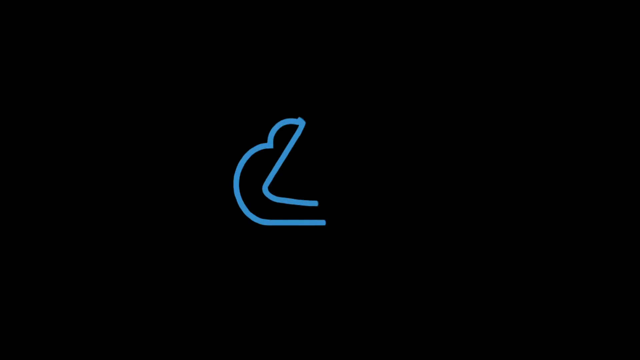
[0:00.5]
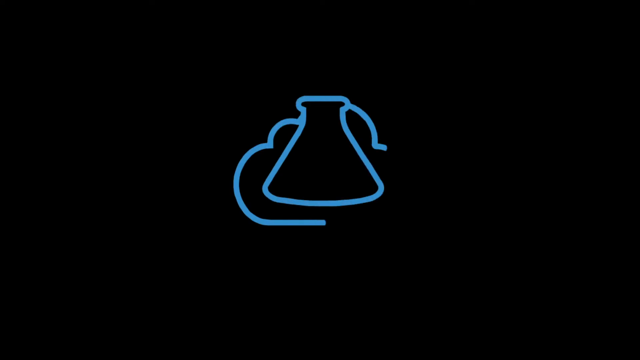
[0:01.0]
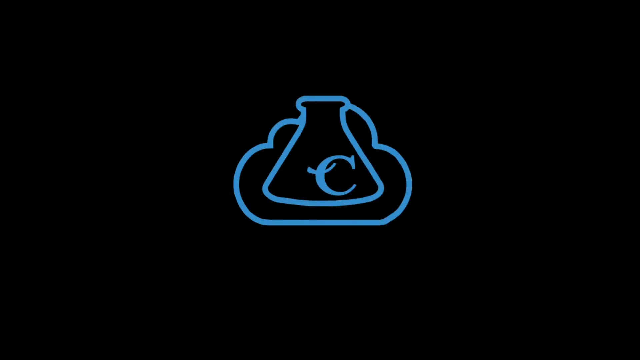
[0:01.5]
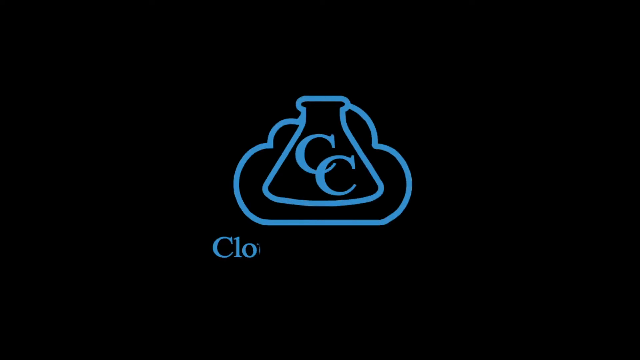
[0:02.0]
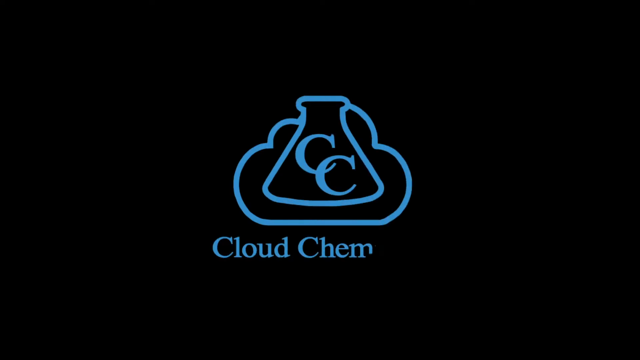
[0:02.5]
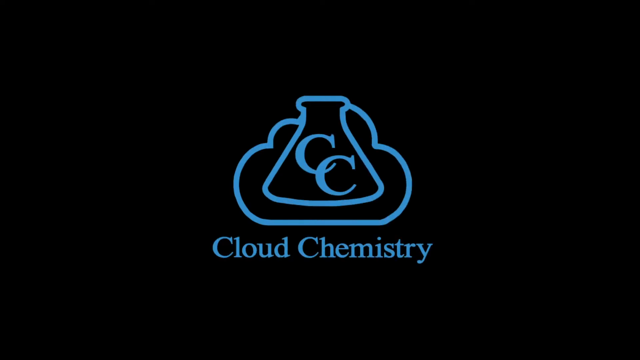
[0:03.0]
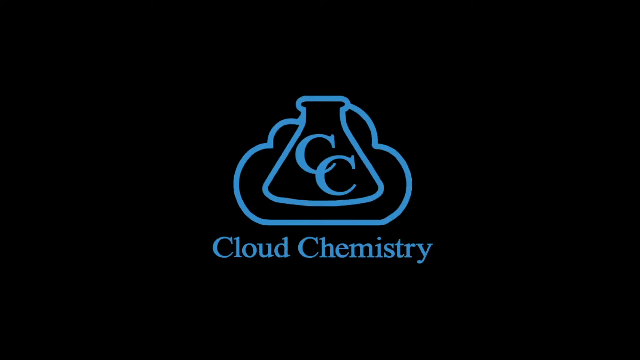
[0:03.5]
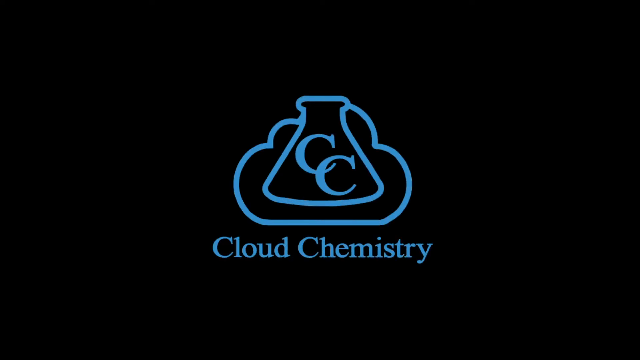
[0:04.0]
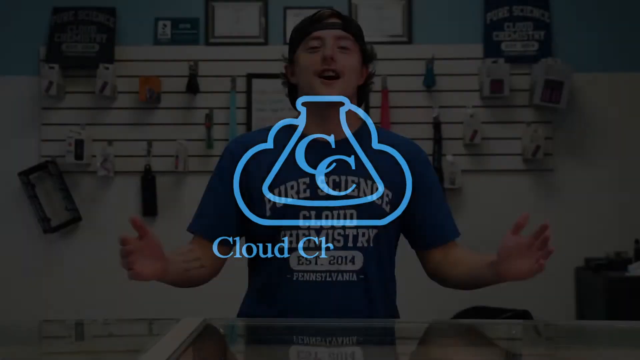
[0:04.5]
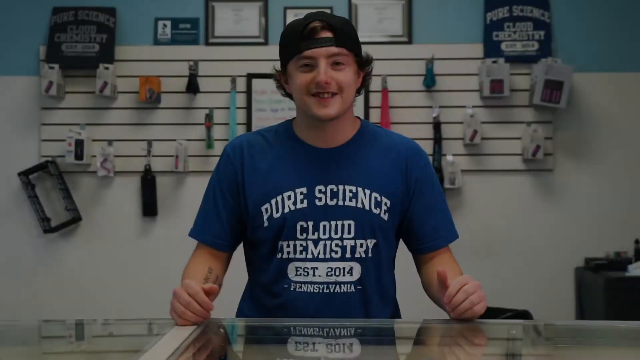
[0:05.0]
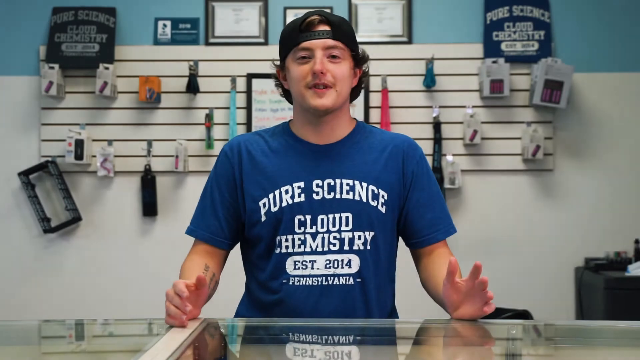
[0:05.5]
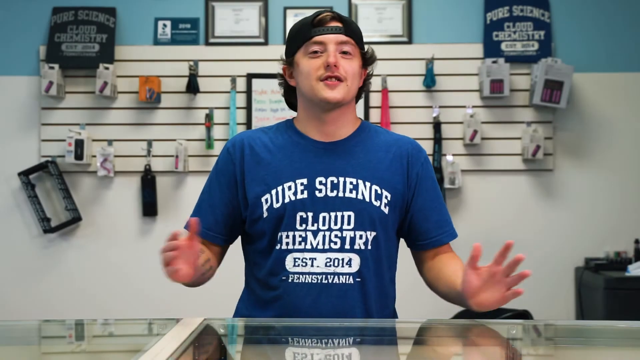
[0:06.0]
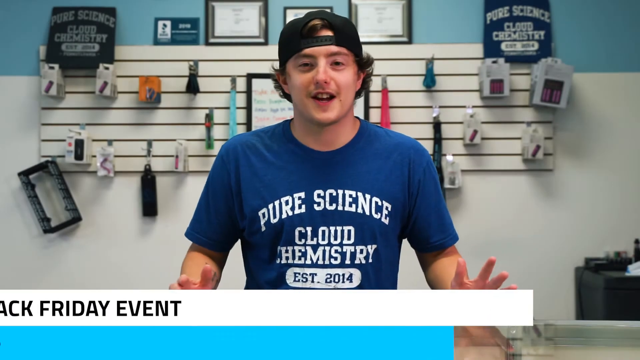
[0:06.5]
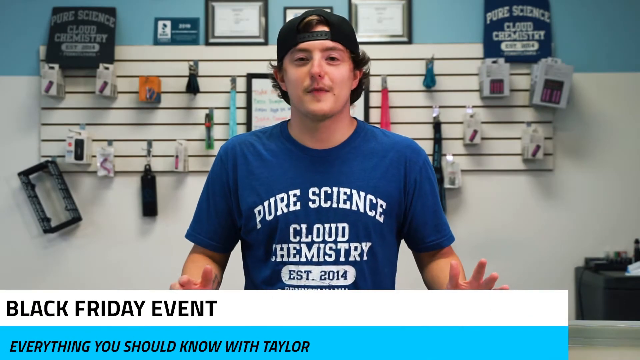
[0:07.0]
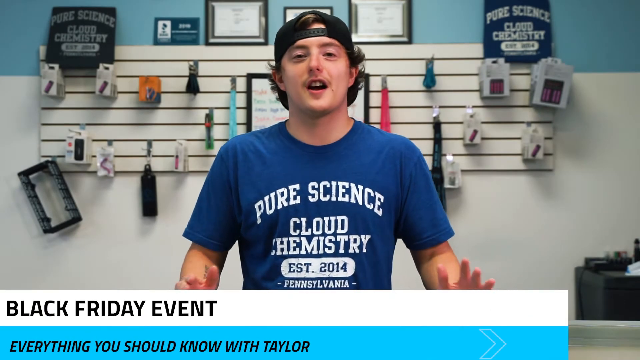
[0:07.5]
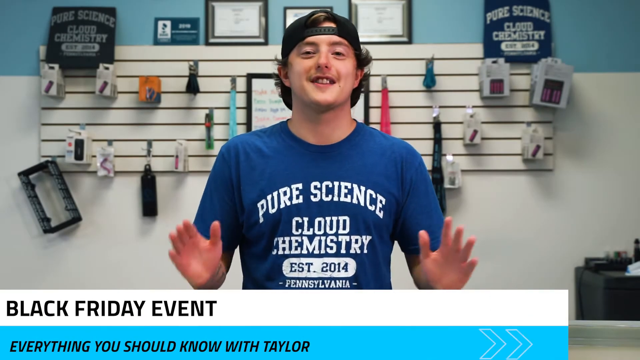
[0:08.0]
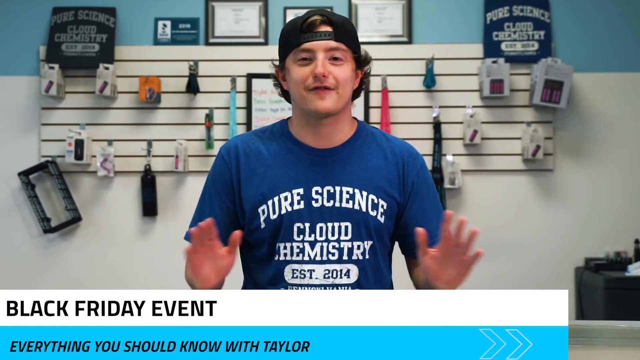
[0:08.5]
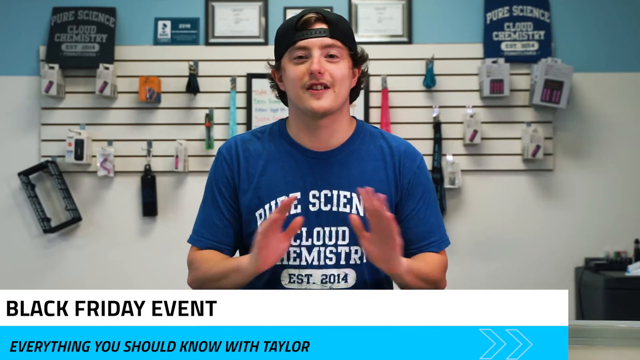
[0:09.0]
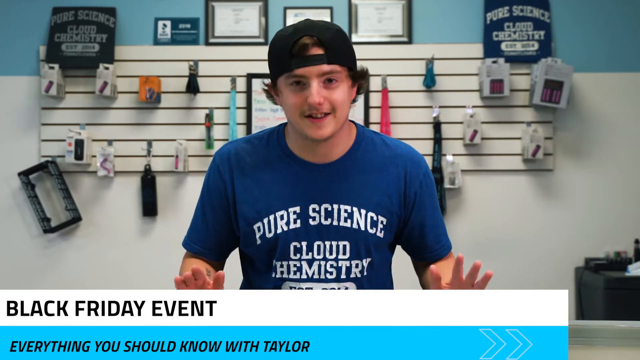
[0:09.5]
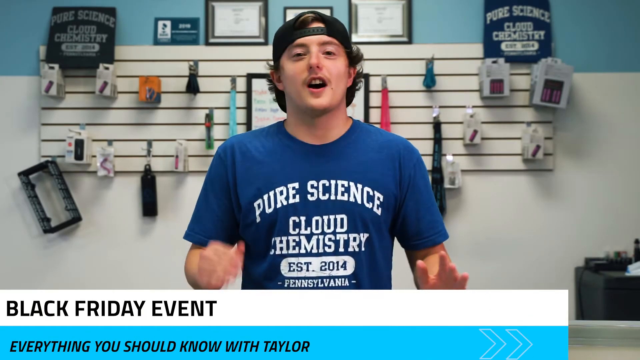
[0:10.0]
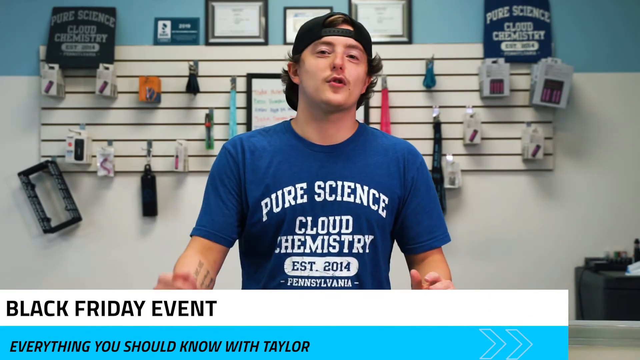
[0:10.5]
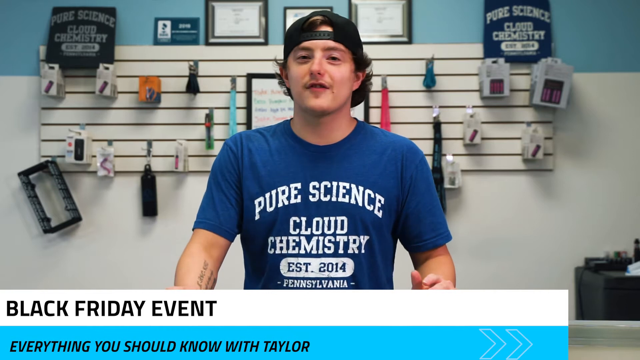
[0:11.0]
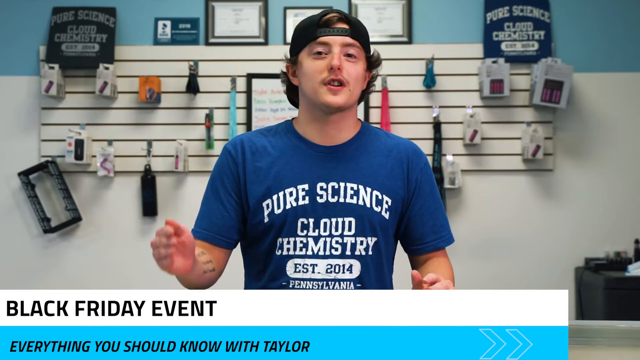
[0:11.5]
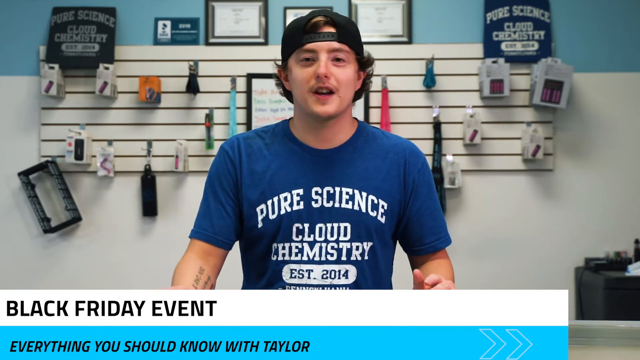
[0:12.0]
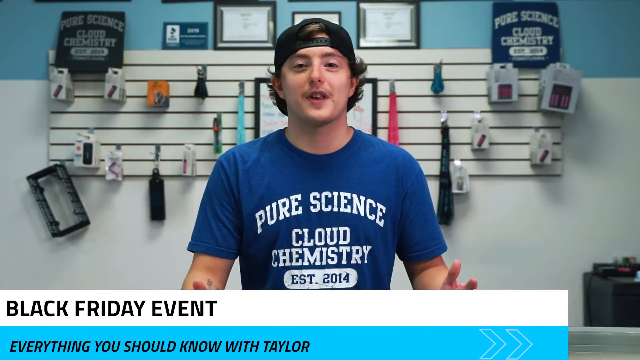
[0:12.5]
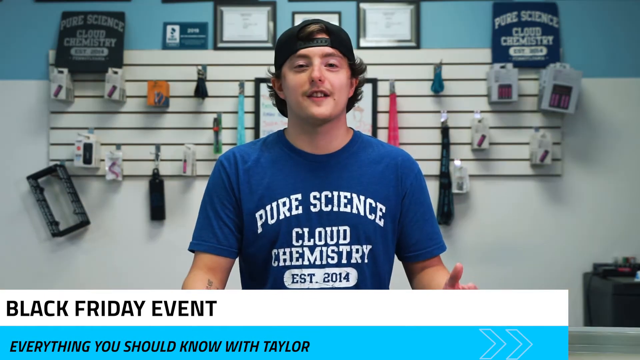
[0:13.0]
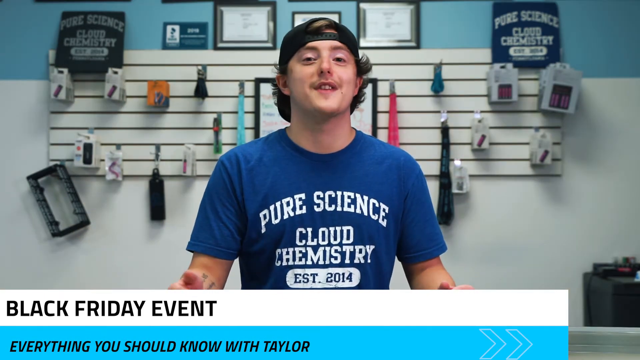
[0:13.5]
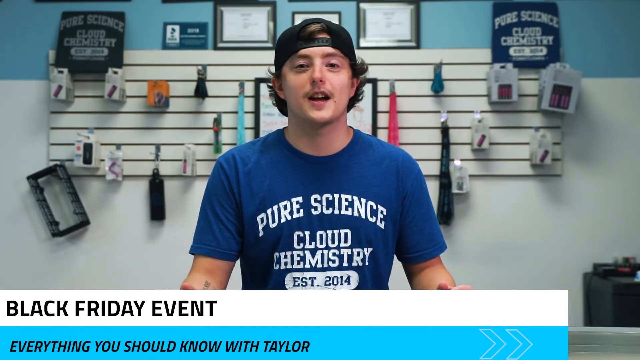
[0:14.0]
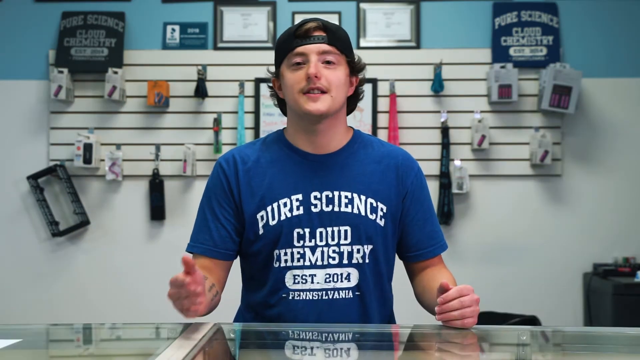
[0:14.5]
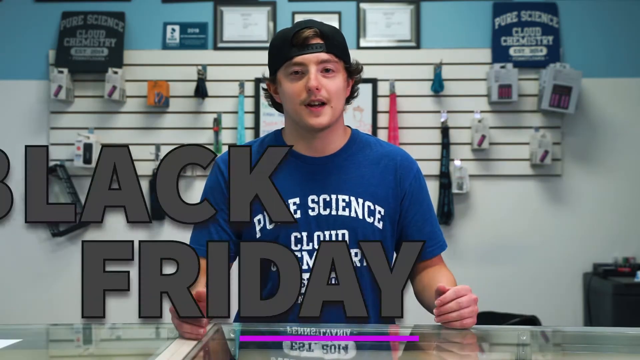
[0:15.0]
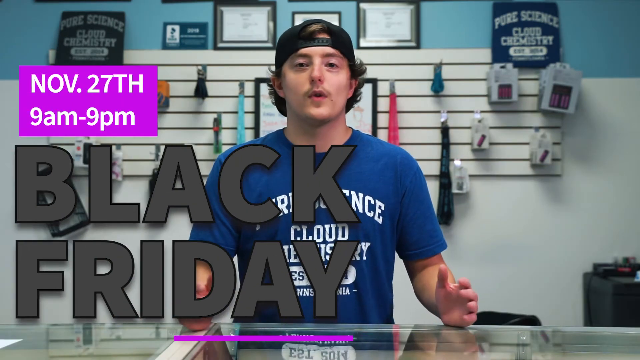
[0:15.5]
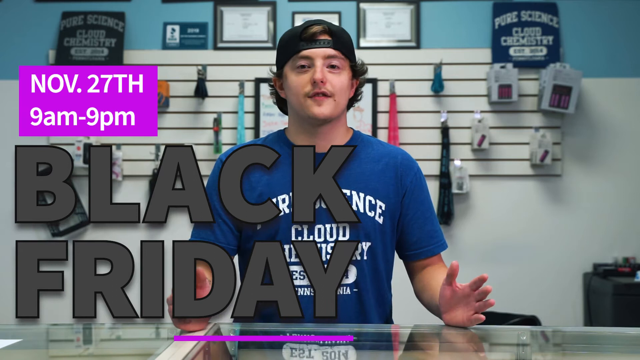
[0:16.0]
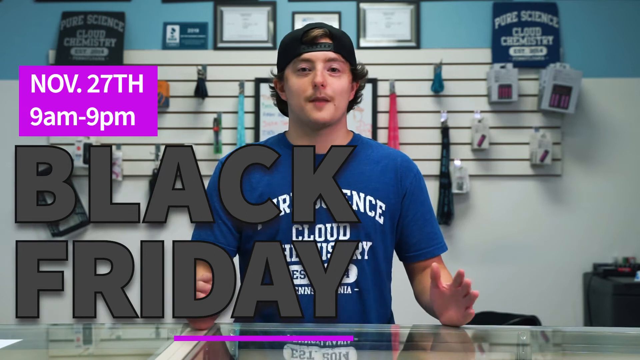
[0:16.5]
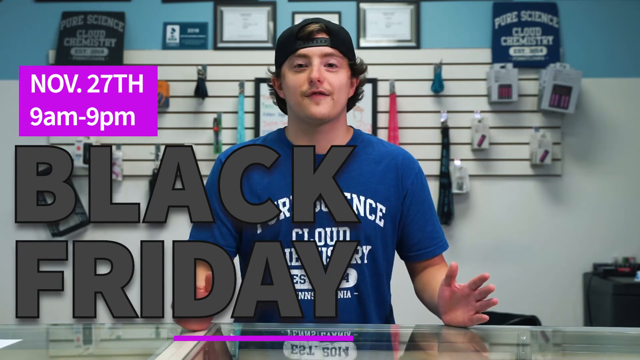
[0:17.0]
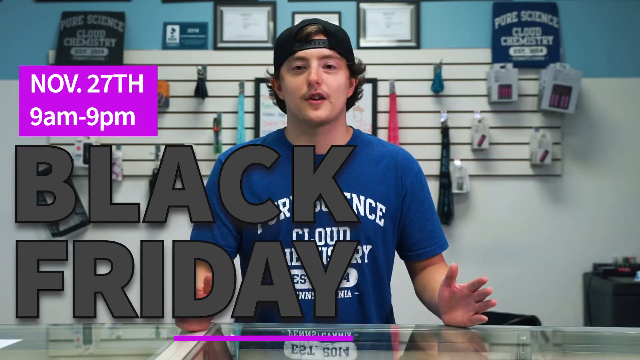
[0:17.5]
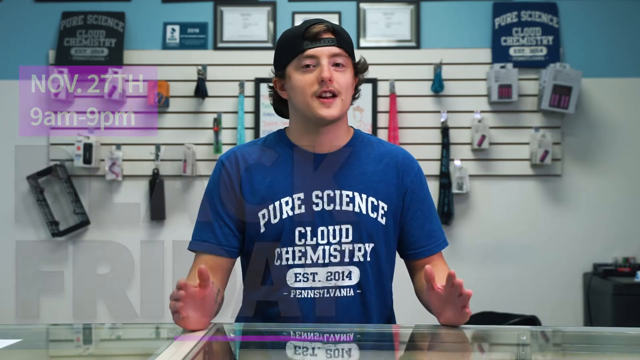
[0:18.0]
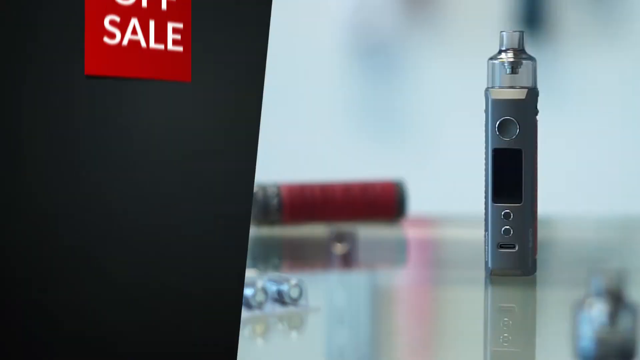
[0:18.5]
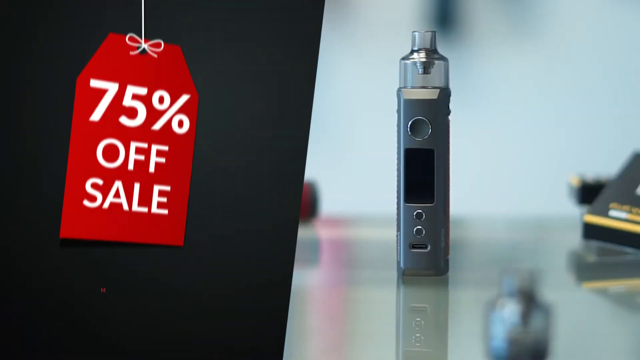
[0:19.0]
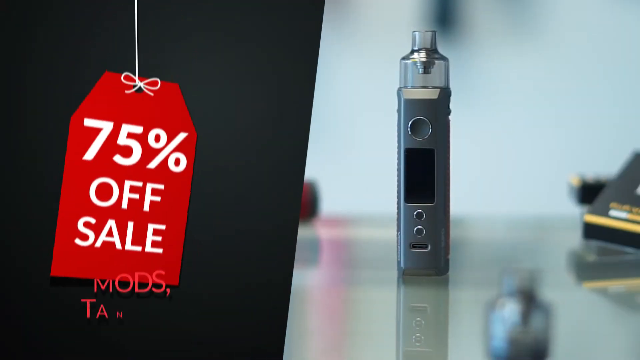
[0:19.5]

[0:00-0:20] The video opens with a young man named Taylor wearing a blue t-shirt and a black hat worn backwards. His t-shirt has the words "pure science cloud chemistry established 2014 Pennsylvania" written on it. He is advertising what you should know about Black Friday, which is set for November 27th from 9 a.m. to 9 p.m. The scene changes and "75% off" flashes up on the screen next to a product. The scene returns to Taylor standing at his counter, talking and gesturing with his hands. Behind him is a white wall with a little bit of blue at the top, and many things hang on pegs on the wall behind him. The words "Black Friday" appear on the screen in gray outlined with black.